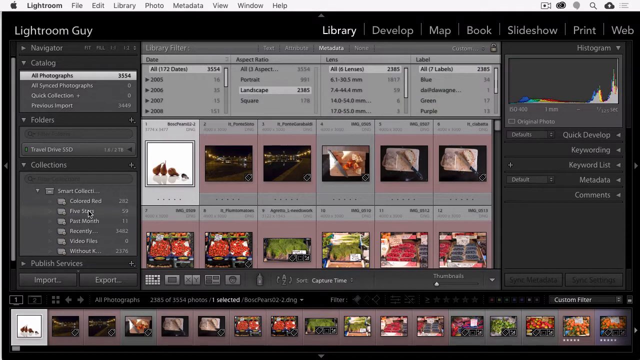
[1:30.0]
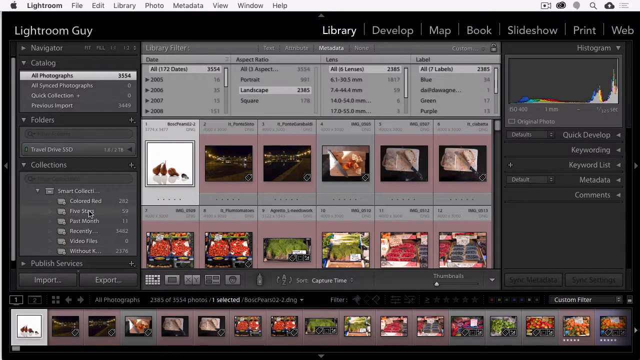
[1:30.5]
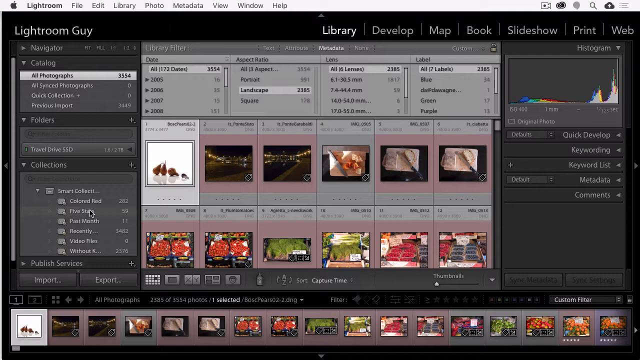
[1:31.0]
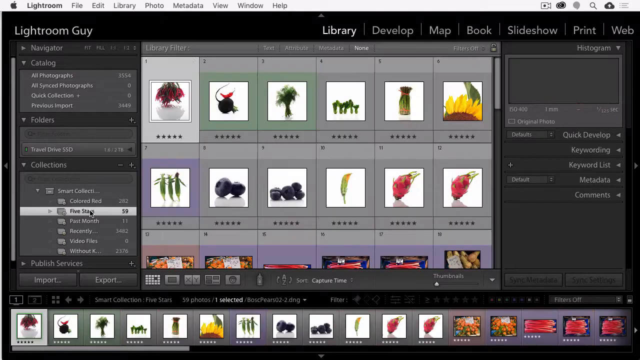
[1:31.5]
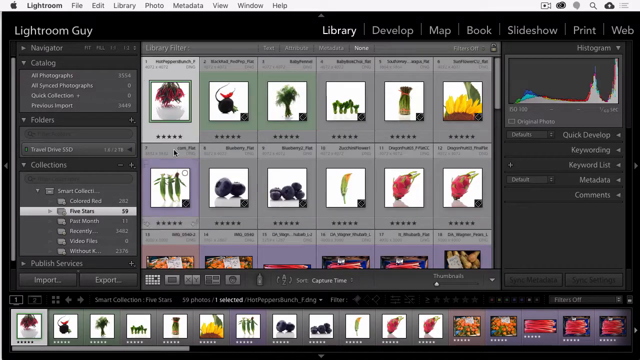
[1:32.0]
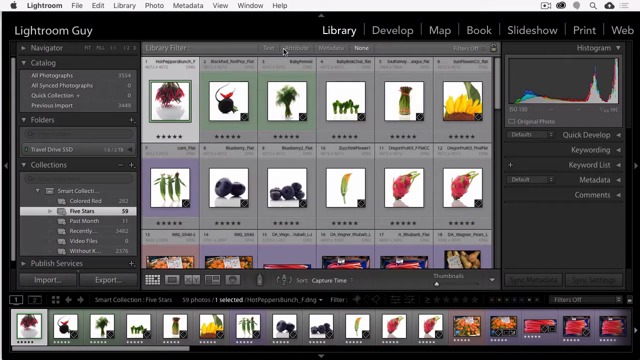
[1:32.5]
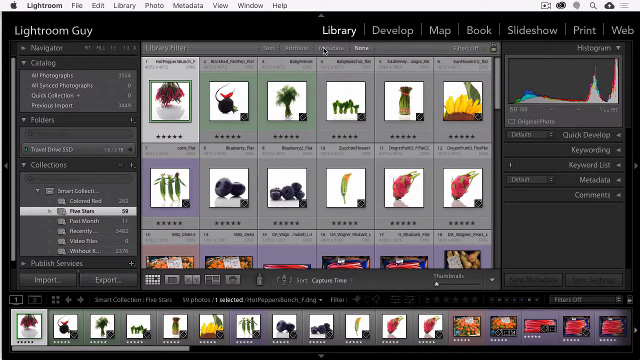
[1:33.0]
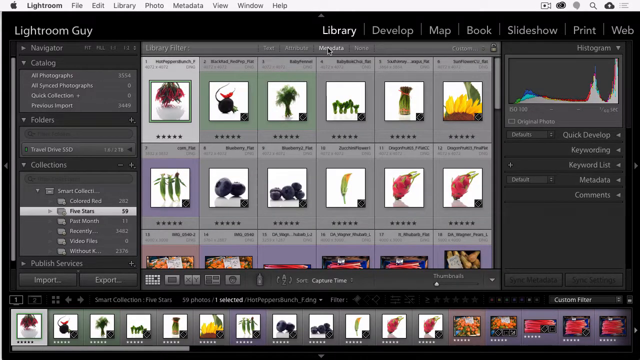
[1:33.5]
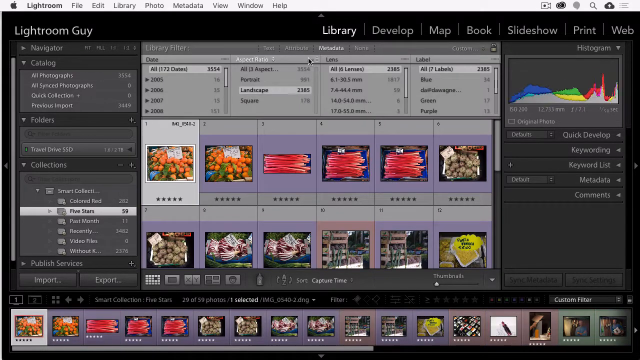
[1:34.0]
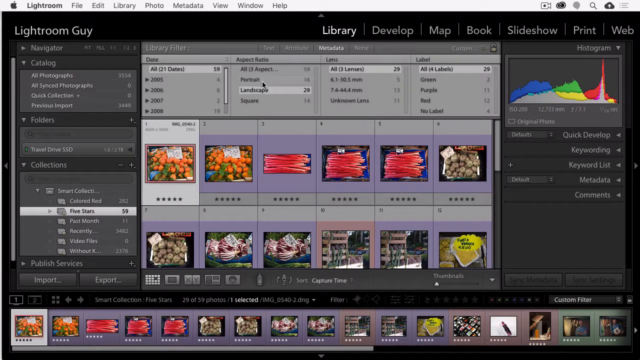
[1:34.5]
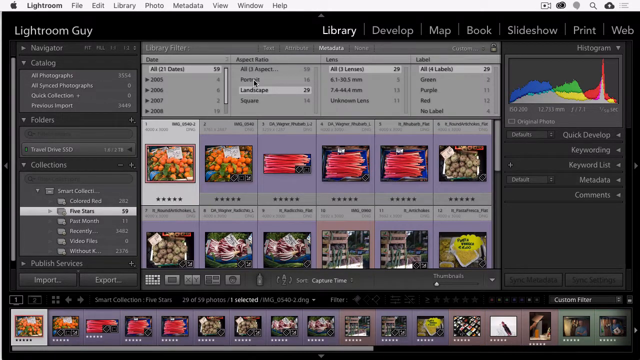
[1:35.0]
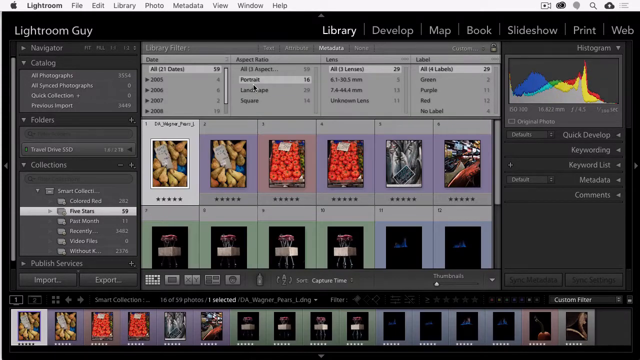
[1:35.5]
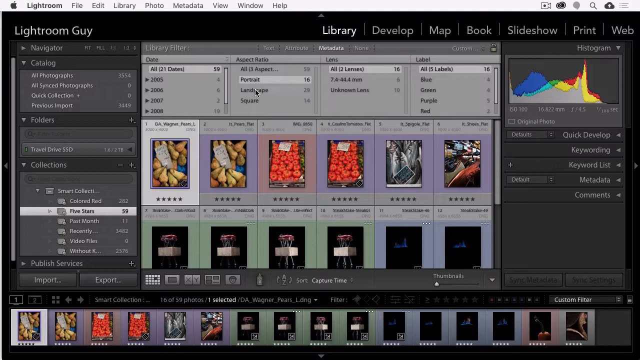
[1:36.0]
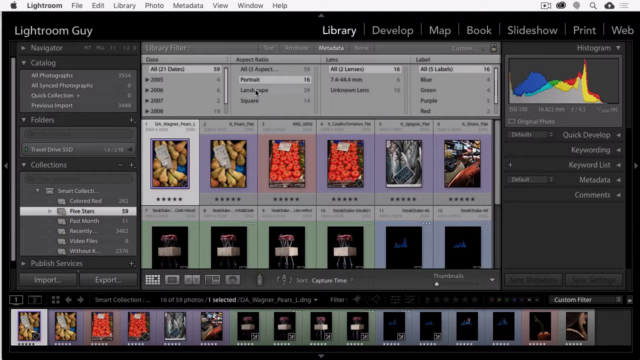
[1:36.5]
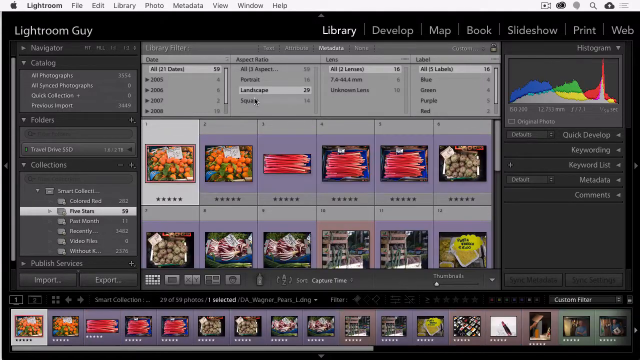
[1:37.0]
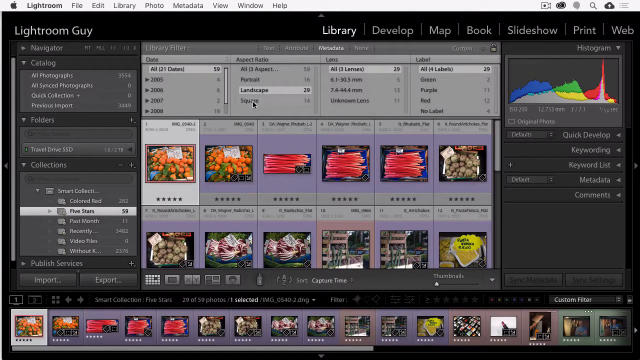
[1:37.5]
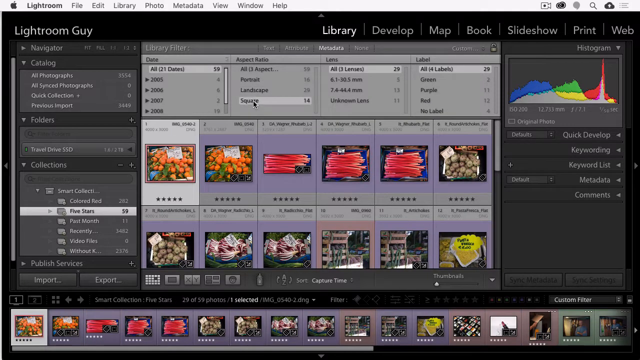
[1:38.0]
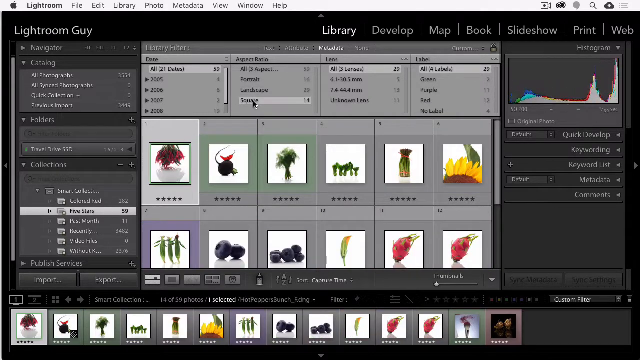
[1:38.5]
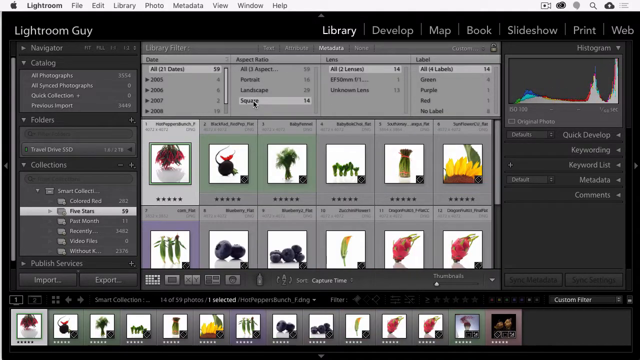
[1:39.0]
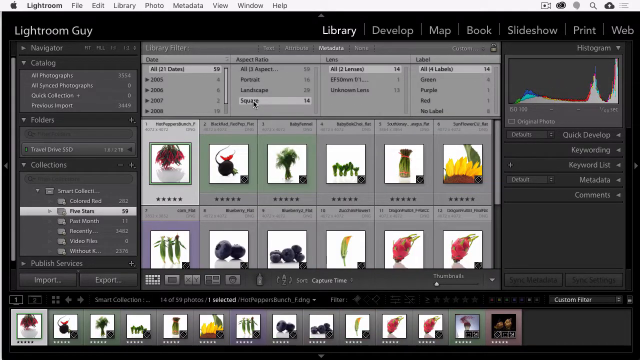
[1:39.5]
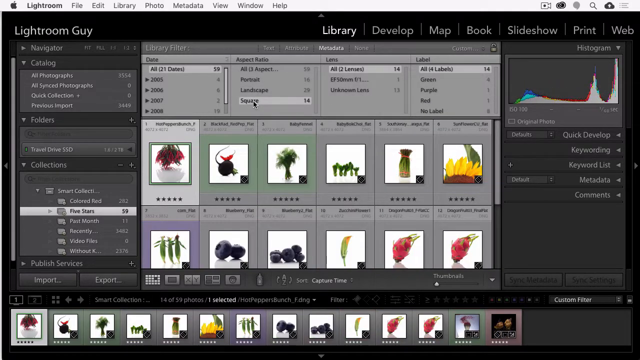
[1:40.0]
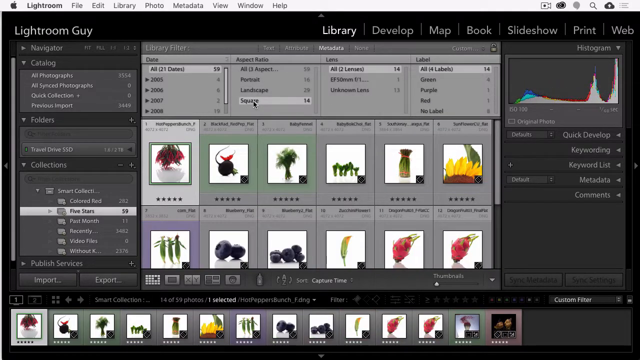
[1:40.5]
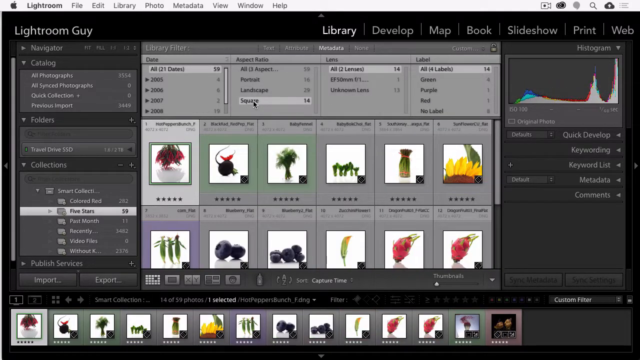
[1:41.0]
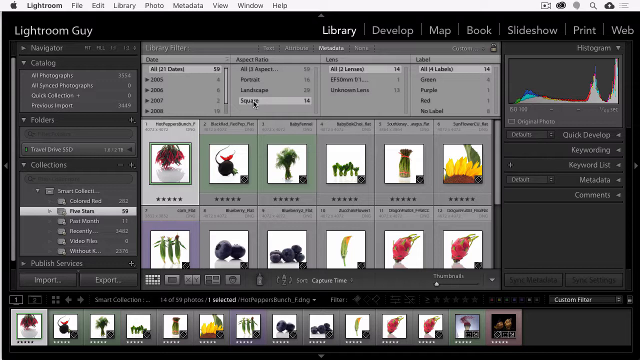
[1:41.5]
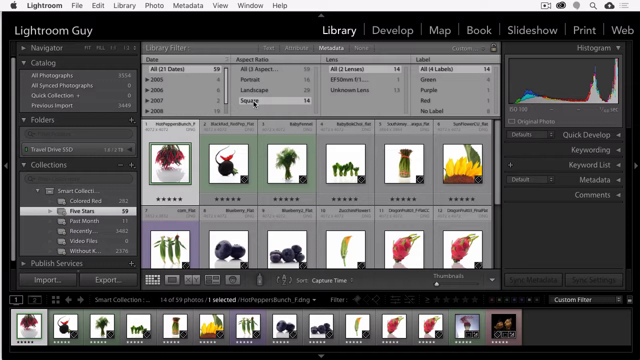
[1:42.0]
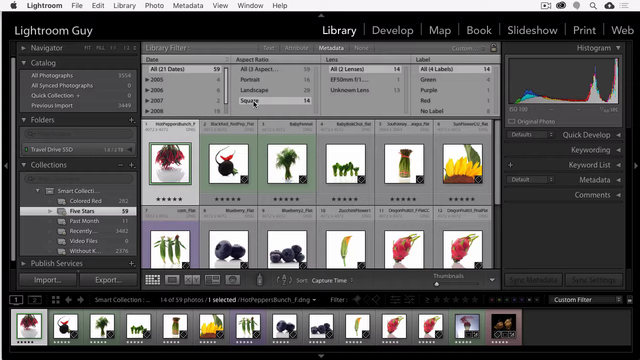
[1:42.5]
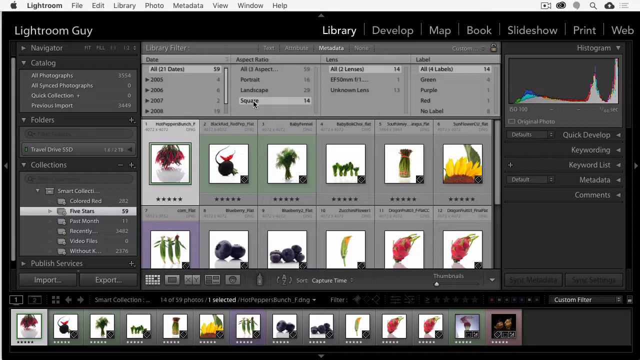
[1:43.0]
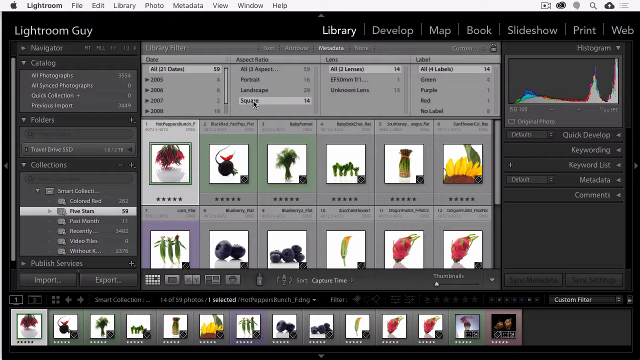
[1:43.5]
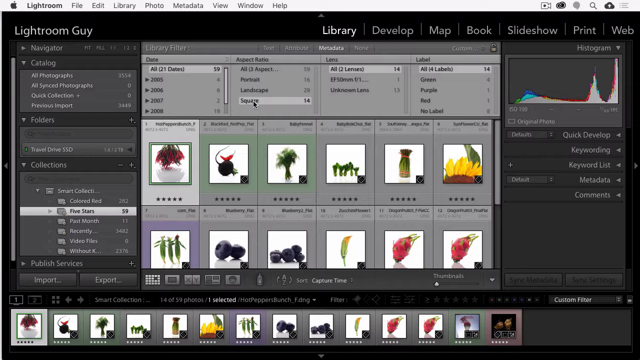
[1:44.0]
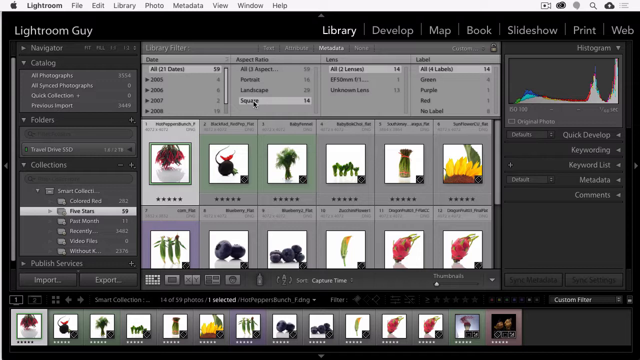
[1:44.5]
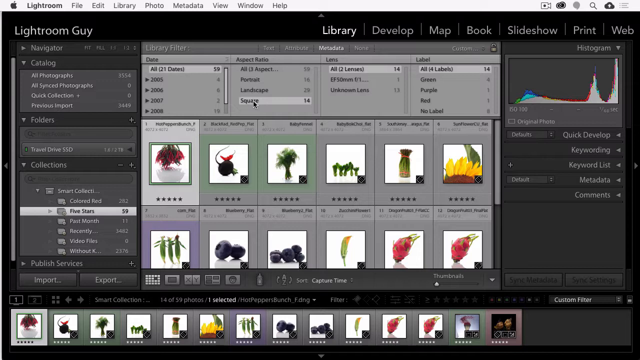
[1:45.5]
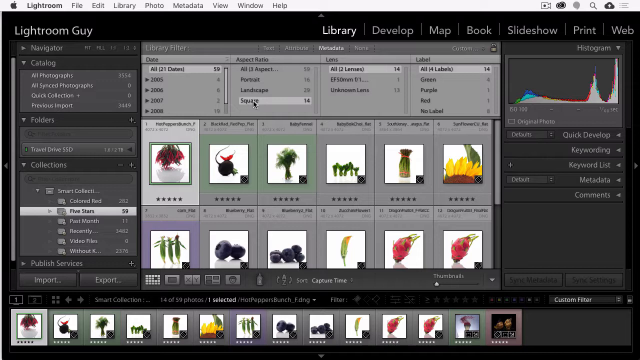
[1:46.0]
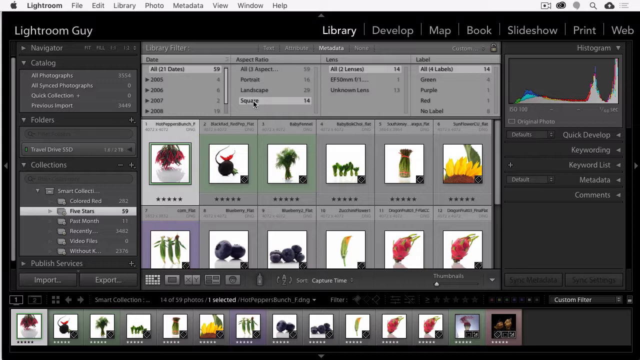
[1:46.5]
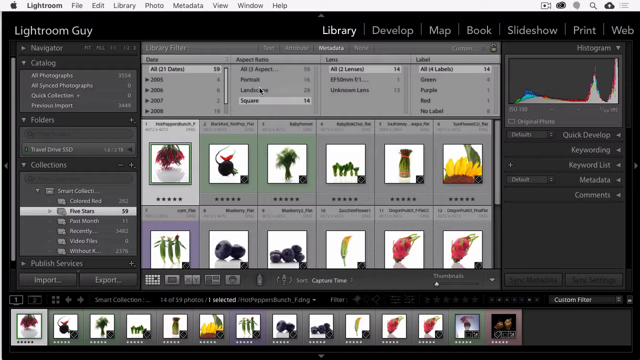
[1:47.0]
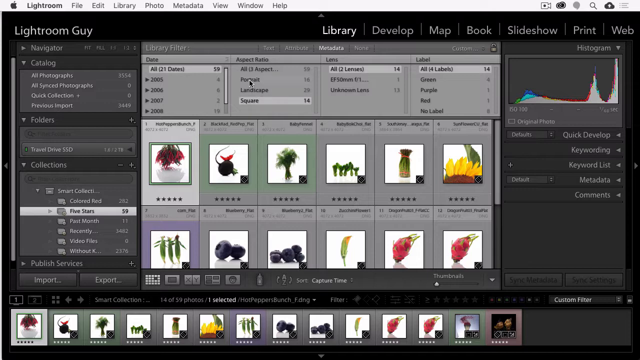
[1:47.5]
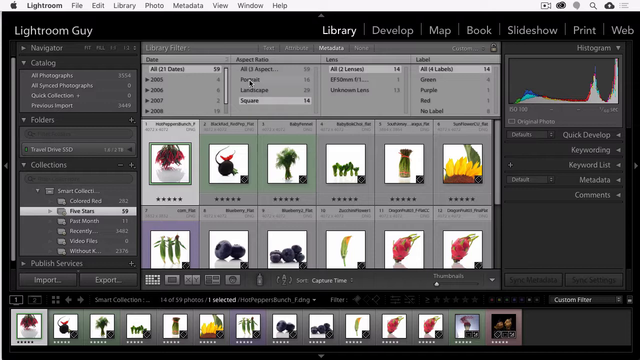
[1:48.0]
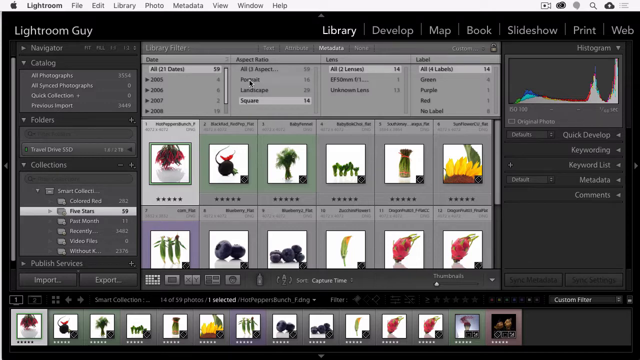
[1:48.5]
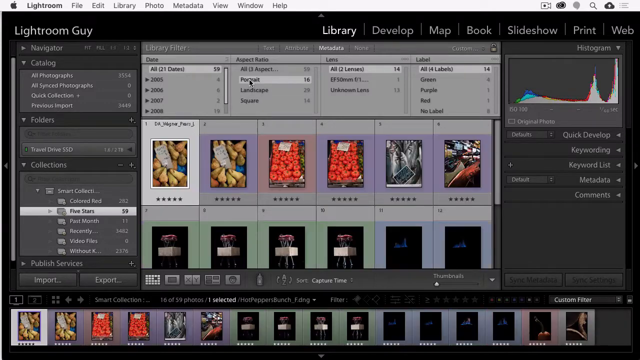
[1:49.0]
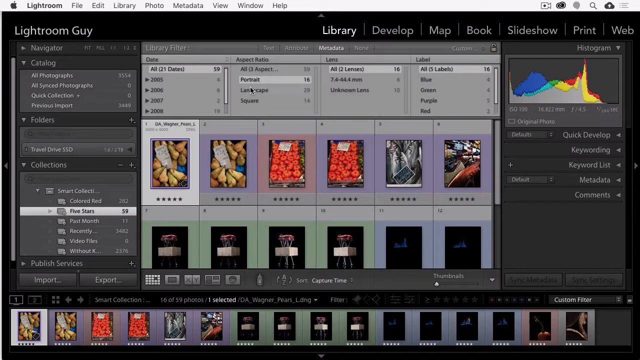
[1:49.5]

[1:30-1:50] The metadata option is clicked, showing the library filter columns: Date, Aspect Ratio, Lens and Label. The Aspect Ratio column has three options: Portrait, Landscape and Square. Clicking Portrait changes the images at the bottom; clicking Landscape also changes the images, which get a pink border around them, with only one image lacking a pink border. Different navigation panels are visible, and in the Collections panel, 5 stars with 59 is clicked. The user then goes back to metadata and clicks the different aspect ratios; clicking Portrait, Landscape and Square each changes the images, though a few images do not change at all. The images are colourful overall.